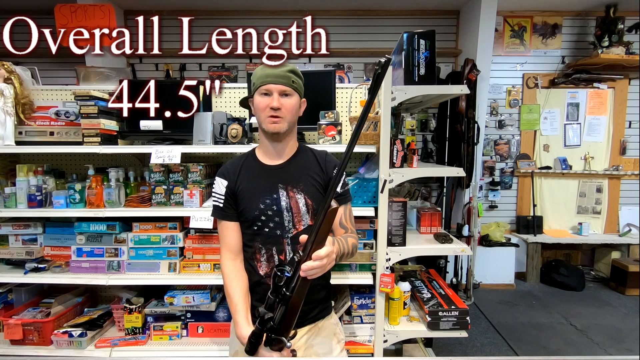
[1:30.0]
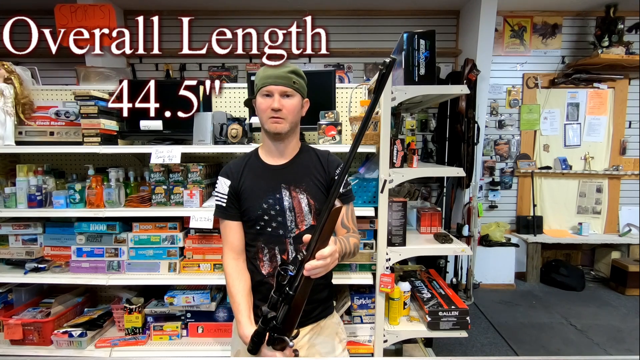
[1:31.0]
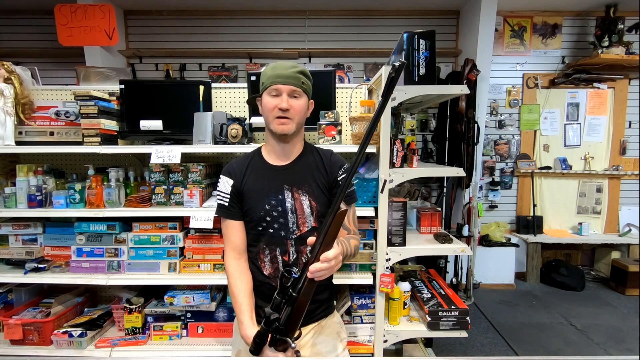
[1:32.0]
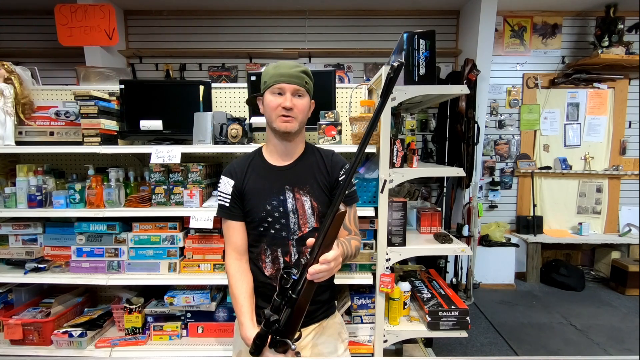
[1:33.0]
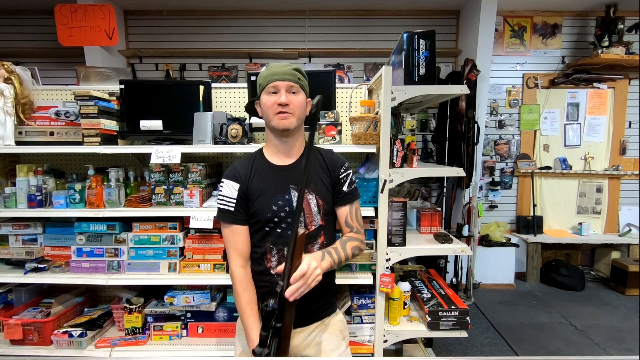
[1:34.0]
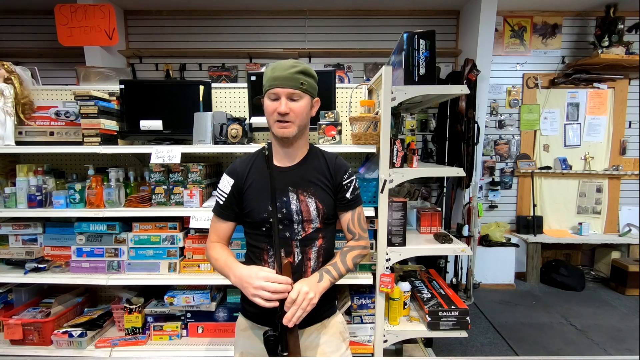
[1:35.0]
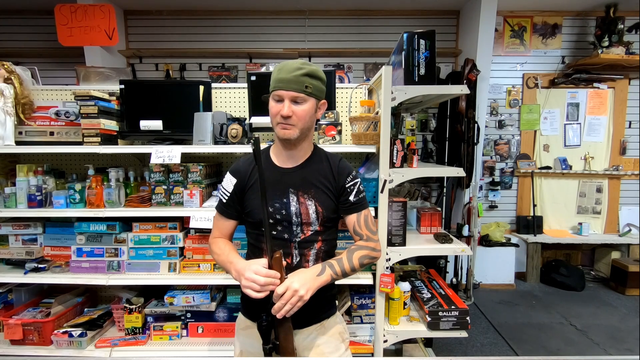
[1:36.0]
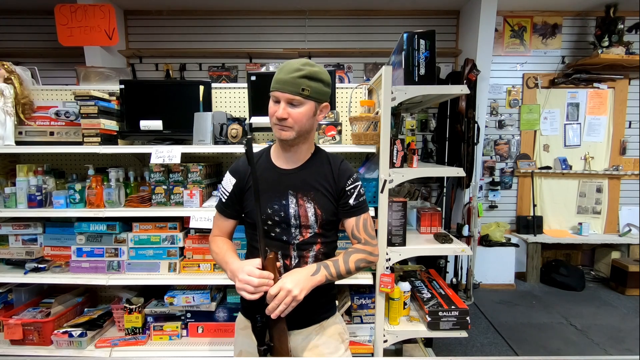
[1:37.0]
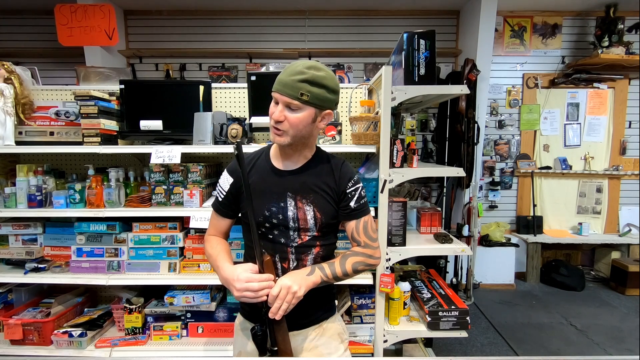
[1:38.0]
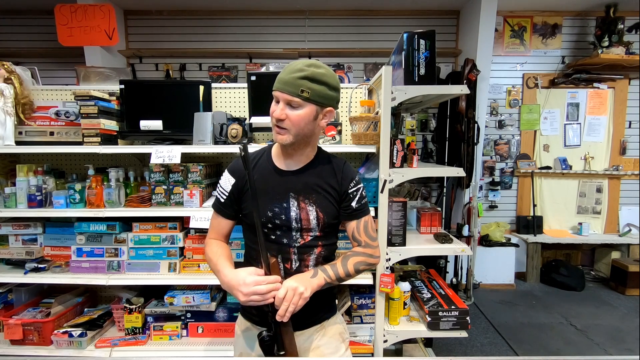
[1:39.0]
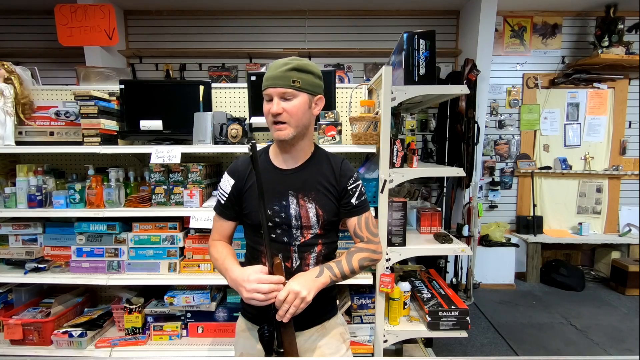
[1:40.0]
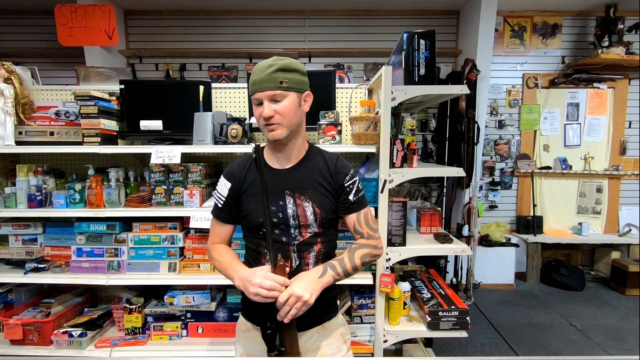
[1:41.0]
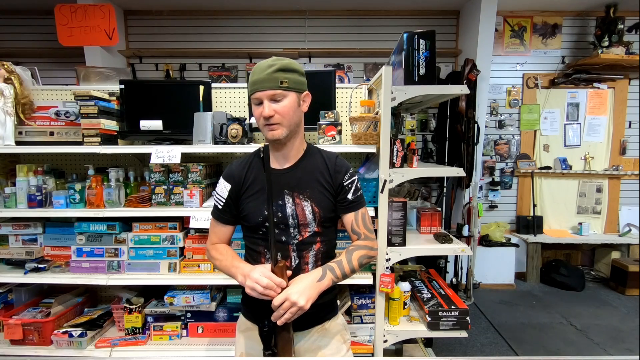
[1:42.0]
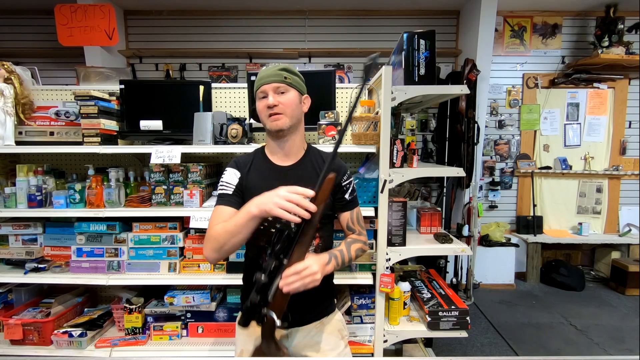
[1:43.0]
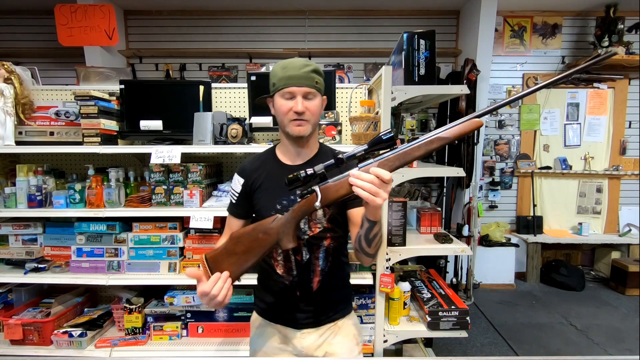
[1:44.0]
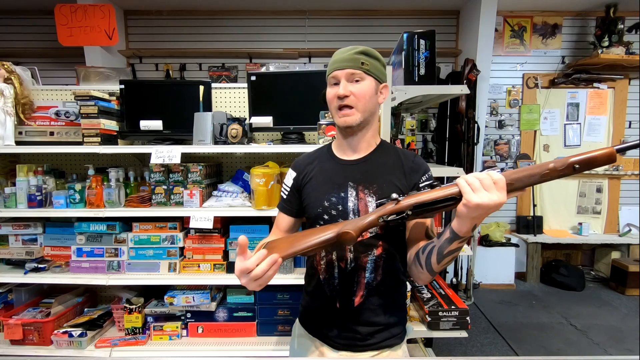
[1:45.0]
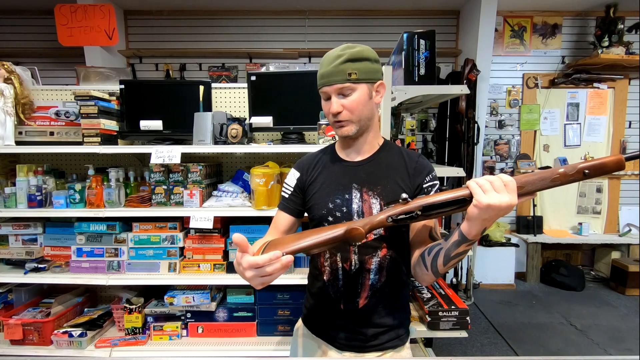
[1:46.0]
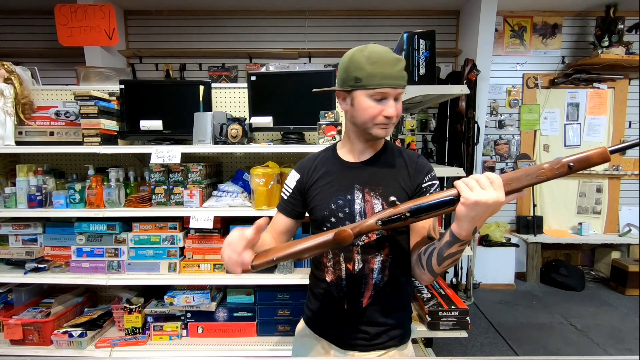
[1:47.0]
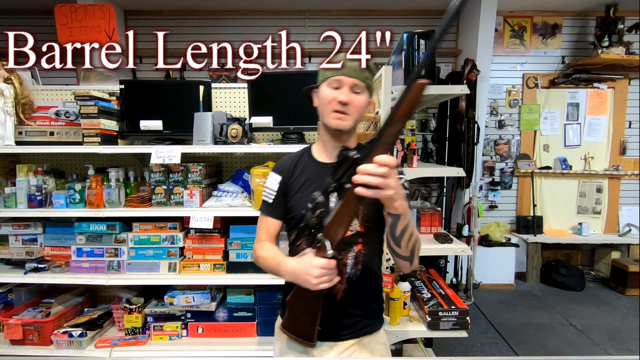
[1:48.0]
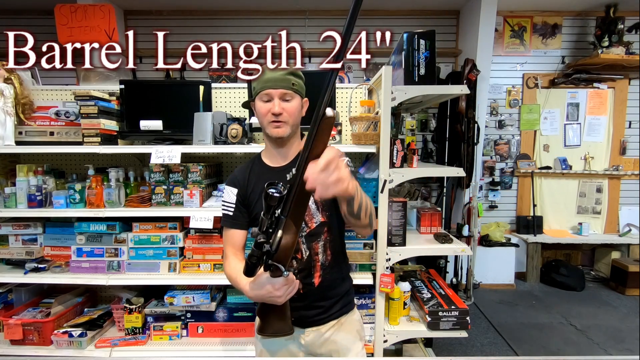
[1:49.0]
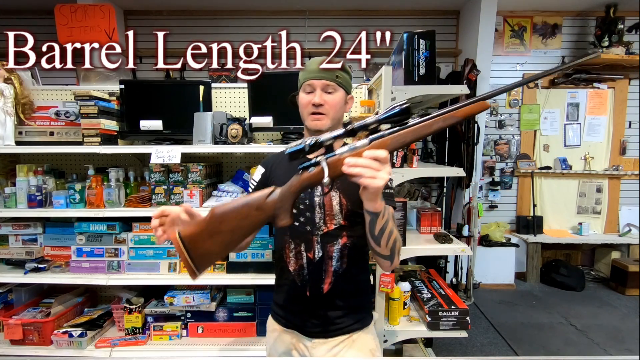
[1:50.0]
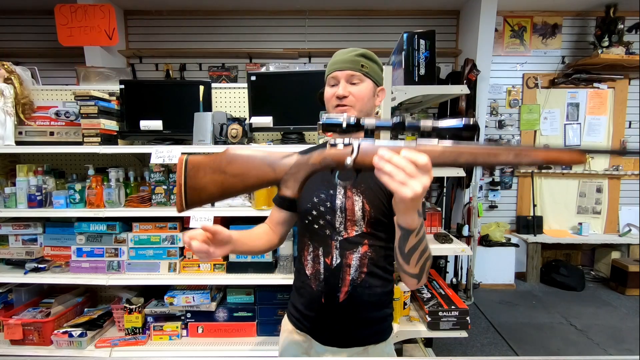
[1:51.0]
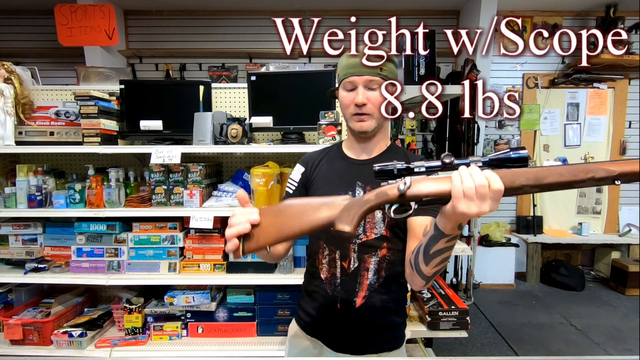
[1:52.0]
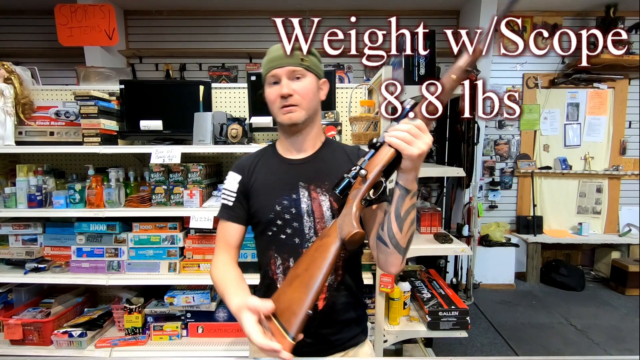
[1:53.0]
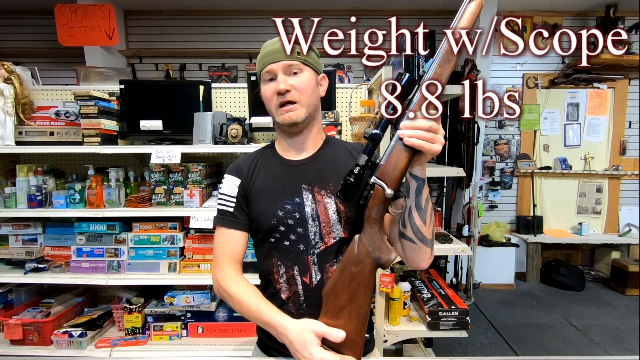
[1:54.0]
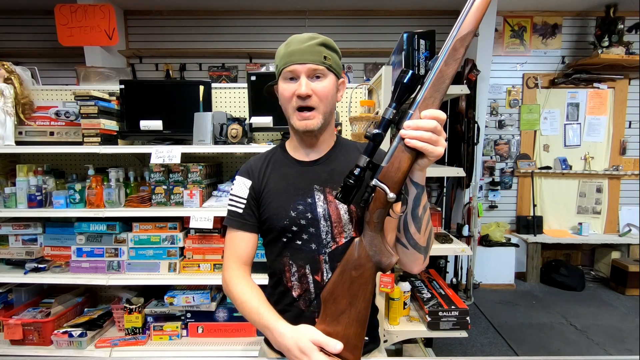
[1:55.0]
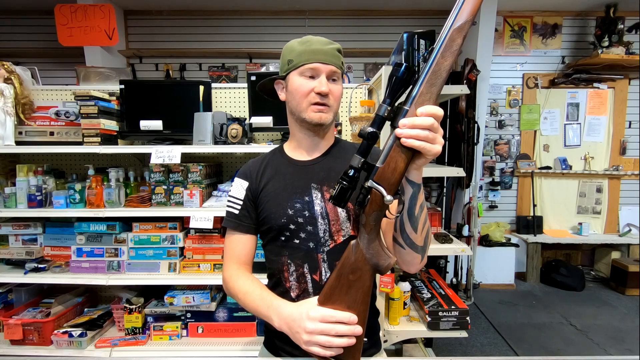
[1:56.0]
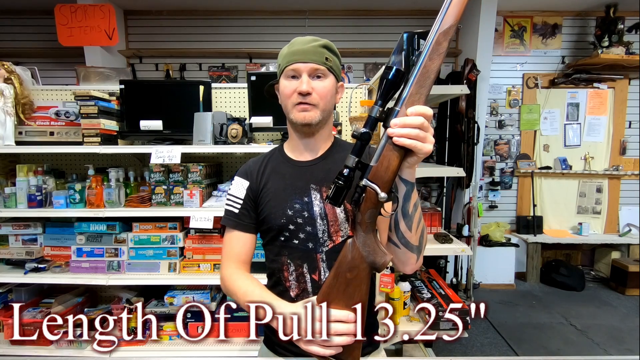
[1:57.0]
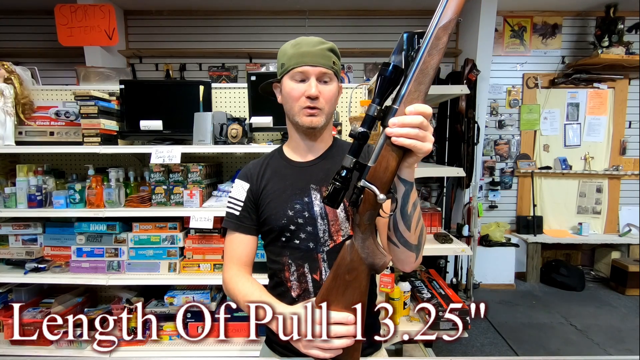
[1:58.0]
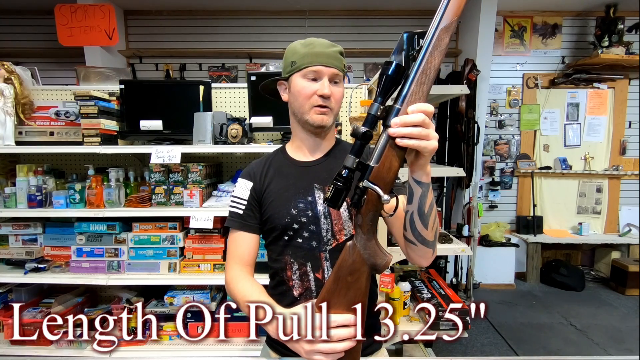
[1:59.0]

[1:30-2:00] A man stands behind the counter of a store, holding a rifle in his left hand. In the top left of the video are the words "overall length 44.5 inches", referring to the length of the rifle. Behind him are a number of cluttered shelves that look like they could be part of a vintage or antique store, with a large collection of jigsaw puzzles in boxes, soaps on the shelf above, and above that some obsolete technology items including a cassette player with a stack of nine or ten cassettes. The man wears a black t-shirt and a green cap as he speaks. He puts the gun down and looks at the end where the bullet comes out while talking to the camera. He lifts the rifle again into a horizontal position and, as he does so, tilts it backwards so that the underneath and the wooden handle can be seen.